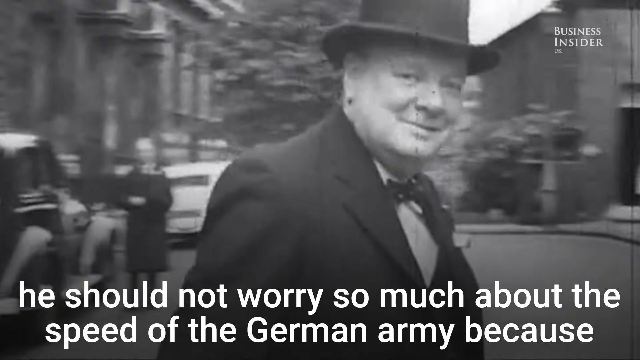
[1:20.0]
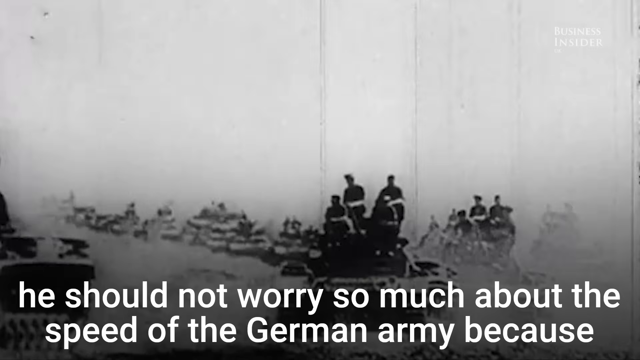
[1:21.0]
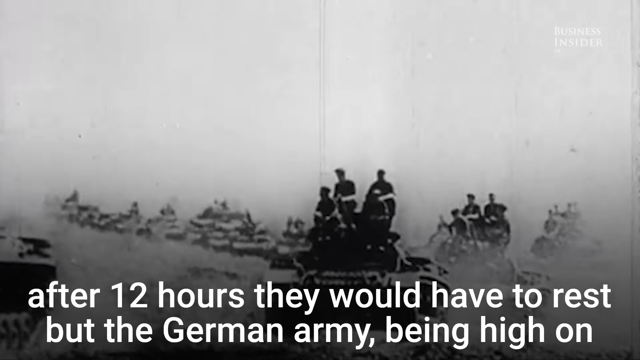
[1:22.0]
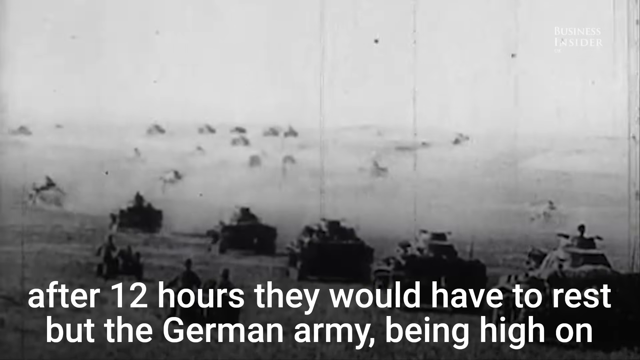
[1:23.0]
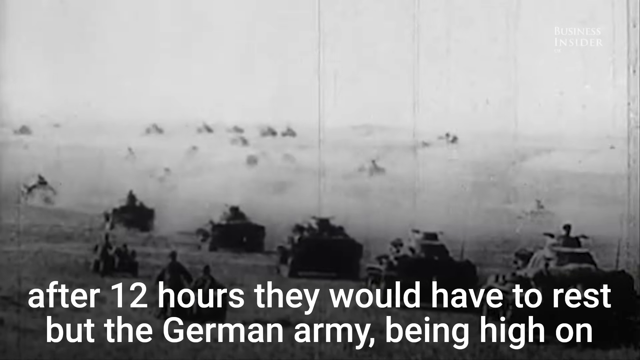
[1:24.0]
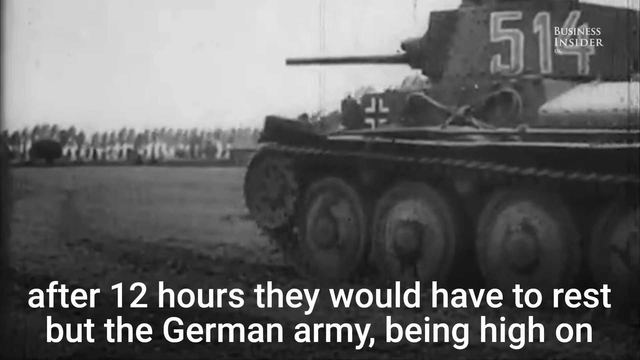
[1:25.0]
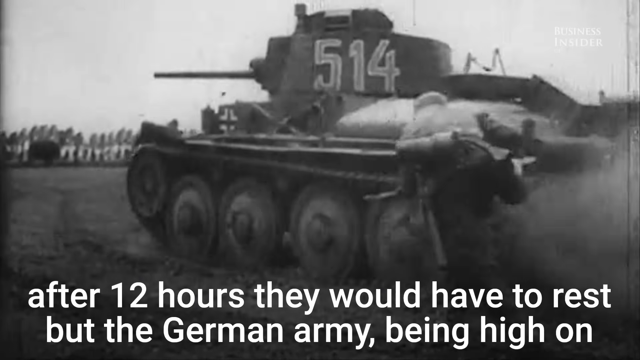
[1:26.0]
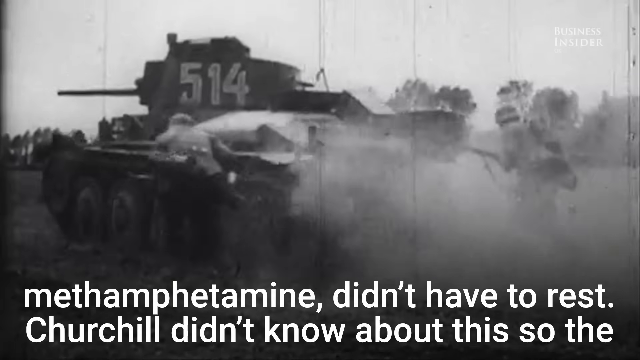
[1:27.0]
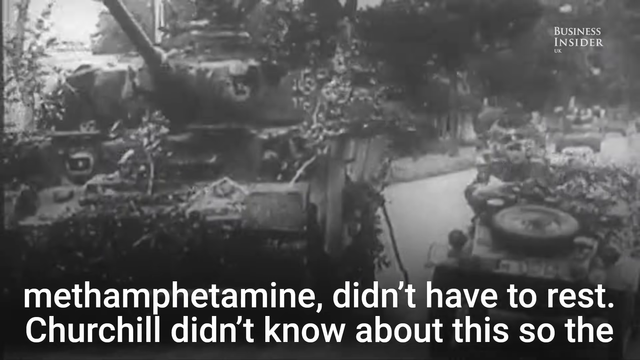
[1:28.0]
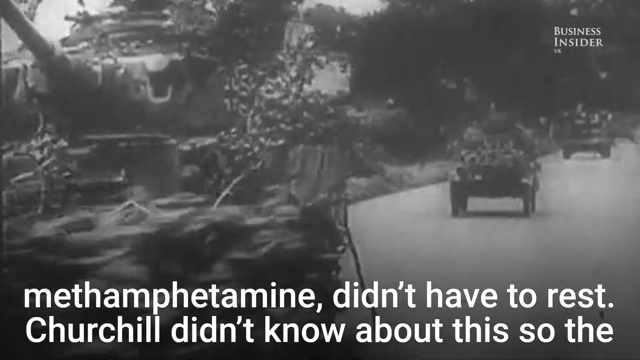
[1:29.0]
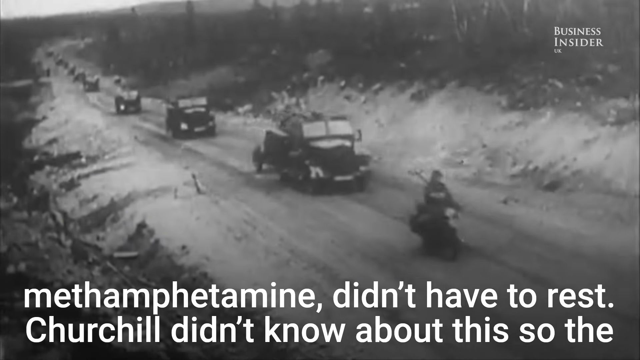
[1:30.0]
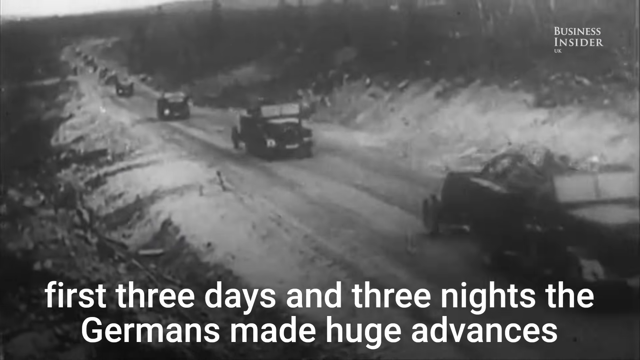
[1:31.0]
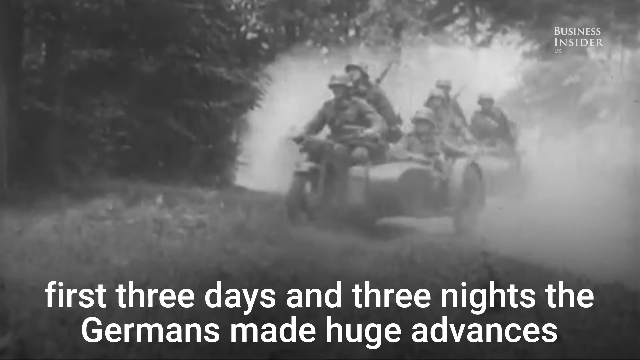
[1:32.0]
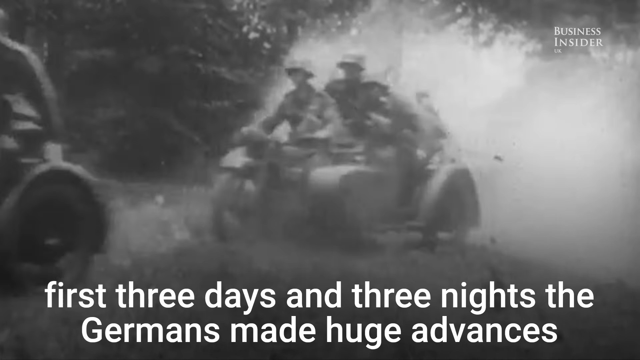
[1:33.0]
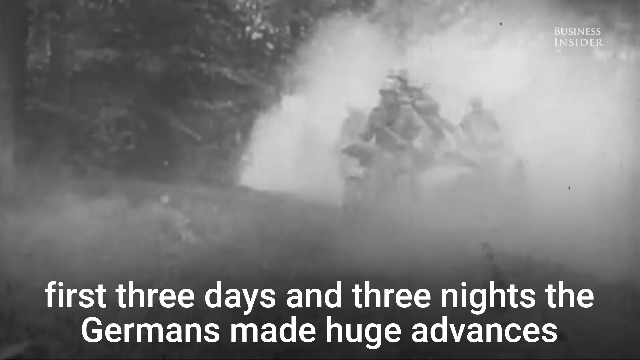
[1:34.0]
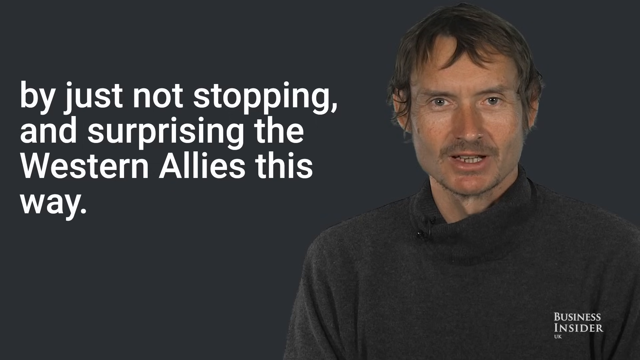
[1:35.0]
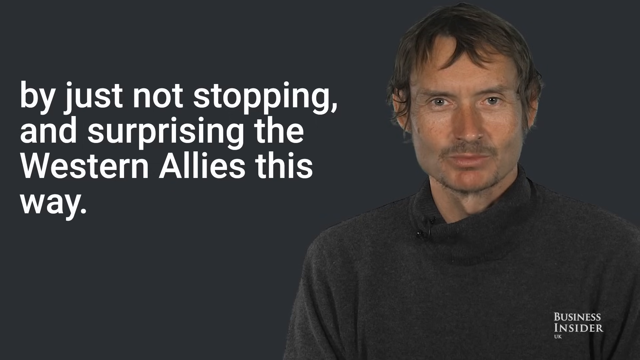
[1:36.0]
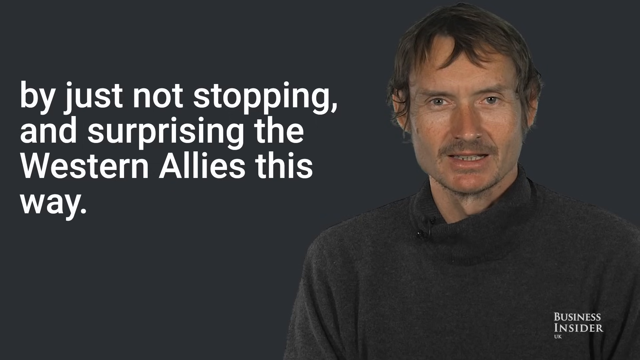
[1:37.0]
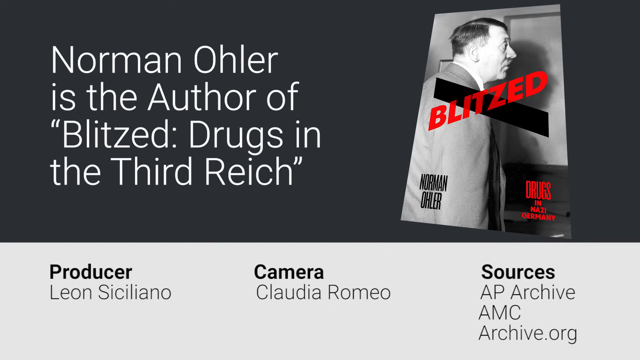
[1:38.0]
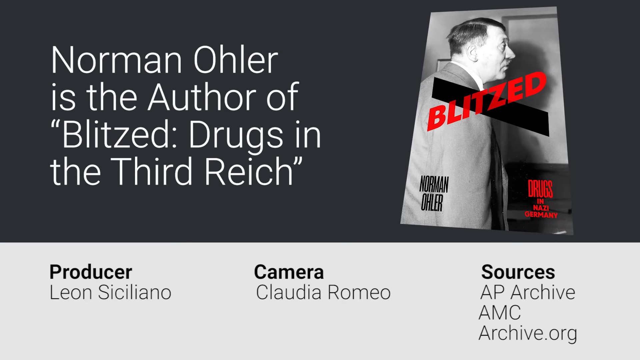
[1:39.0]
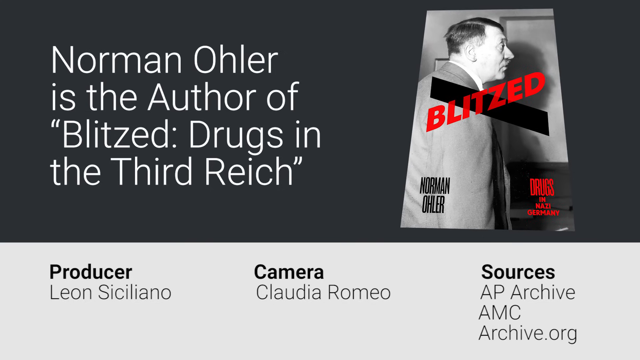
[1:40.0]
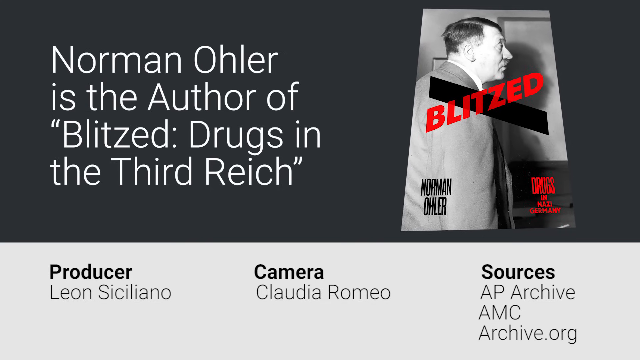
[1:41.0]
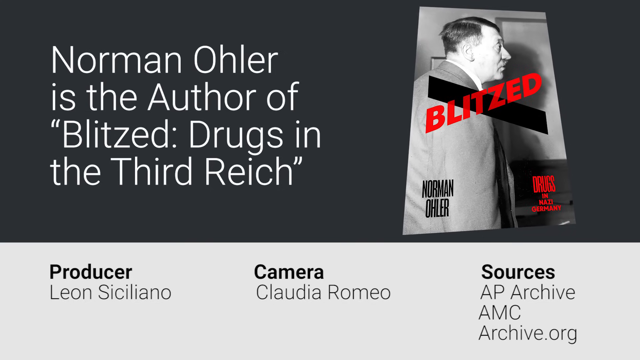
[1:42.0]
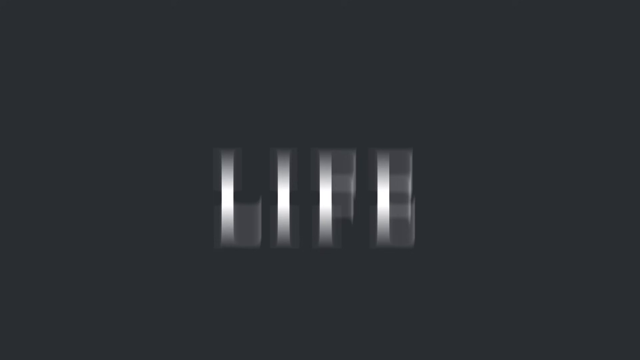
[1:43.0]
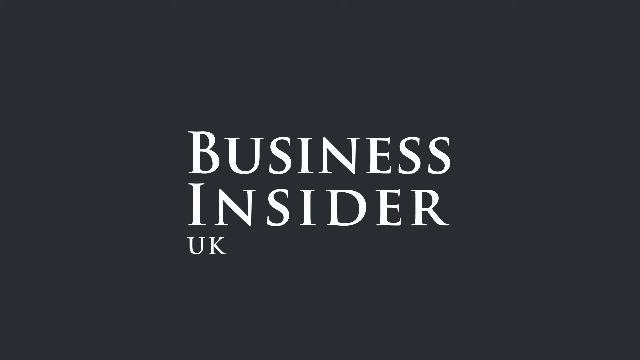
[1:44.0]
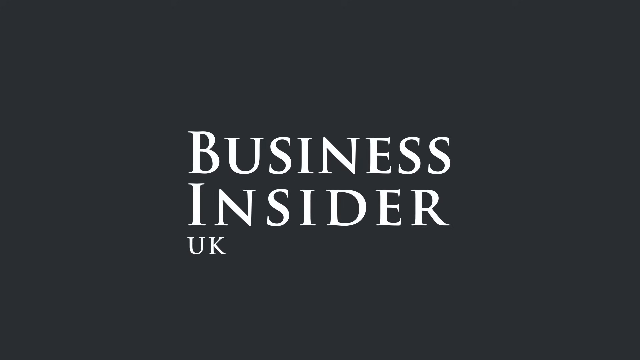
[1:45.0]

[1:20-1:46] Churchill appears briefly at the start, followed by a long shot of a large number of tanks, at least over 20, going across a dirt environment. They each seem to have their own numbers; one is labeled 514. Some soldiers are in cars and some are running on the land. The same man appears for a couple of seconds, and then text that looks to be his name reads "Norman Oler is the author of Blitzed, Drugs in the Third Reich." On the right is apparently the book cover, showing a man, apparently Hitler, looking to the right, with "Blitzed" in red text set kind of sideways. Credits for the documentary appear at the bottom, and at the end the screen says "Business Insider US."